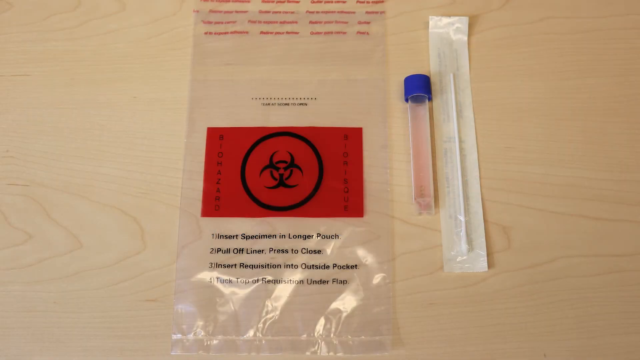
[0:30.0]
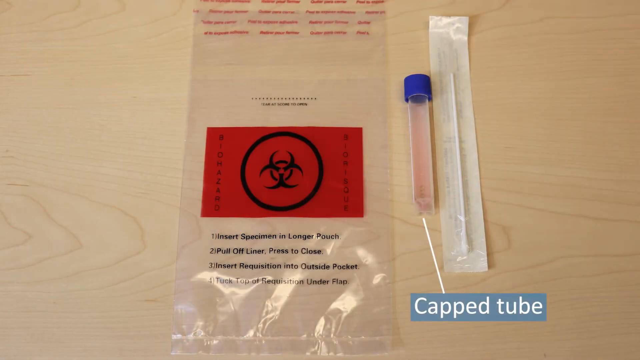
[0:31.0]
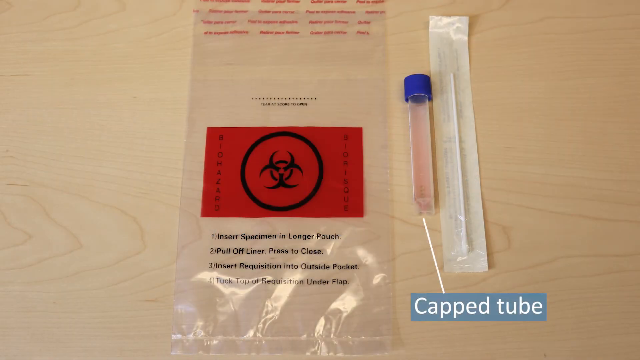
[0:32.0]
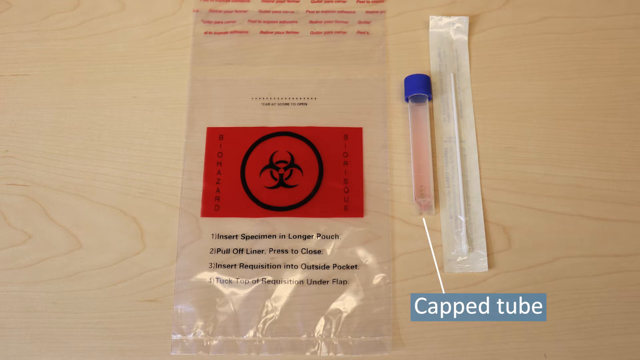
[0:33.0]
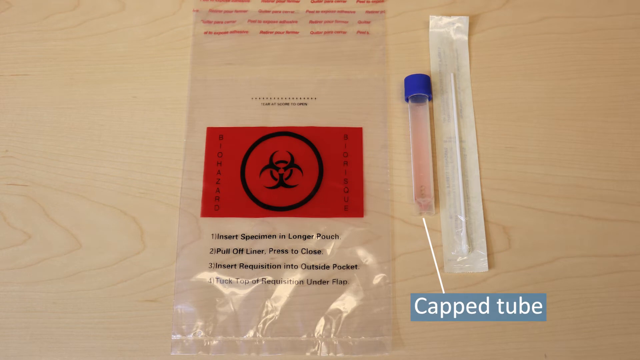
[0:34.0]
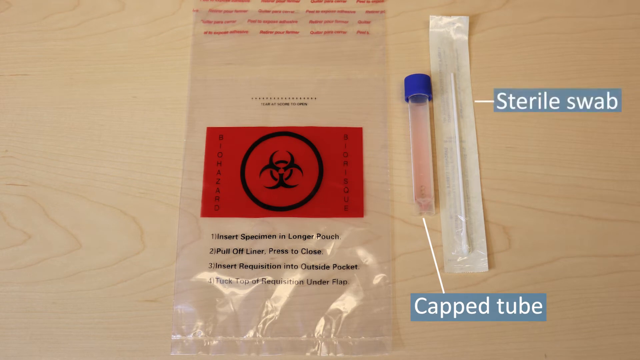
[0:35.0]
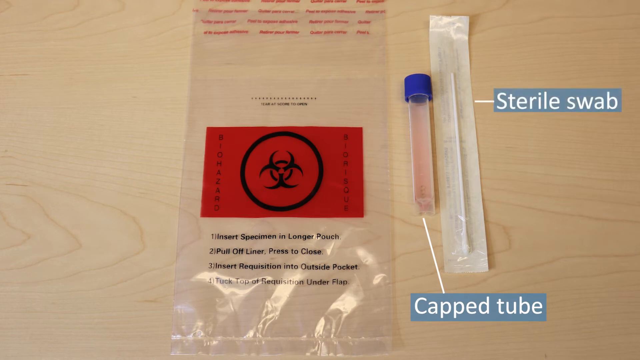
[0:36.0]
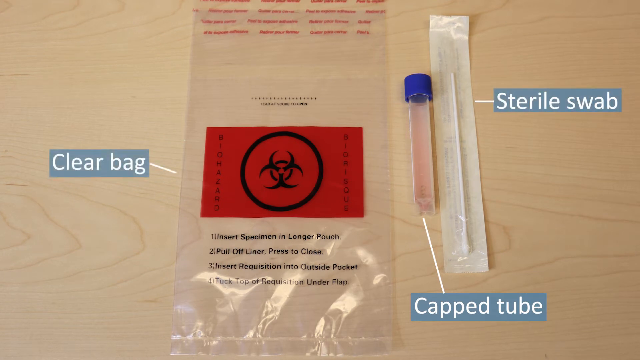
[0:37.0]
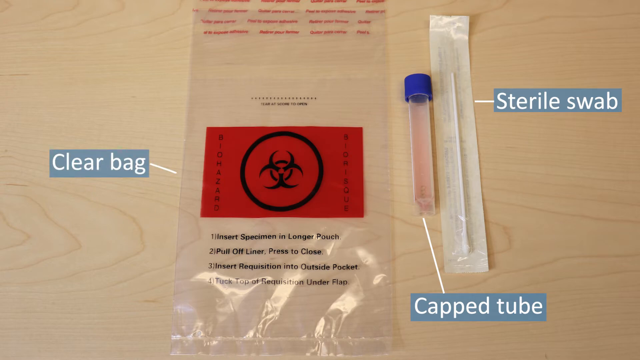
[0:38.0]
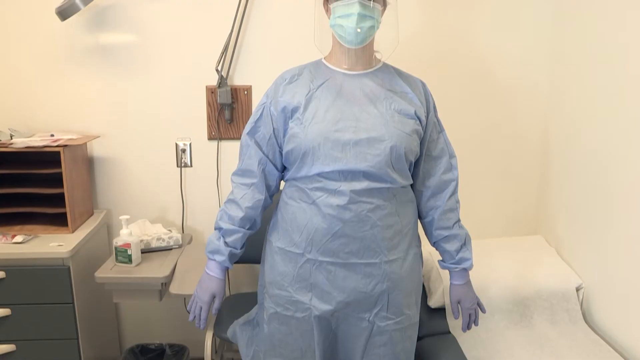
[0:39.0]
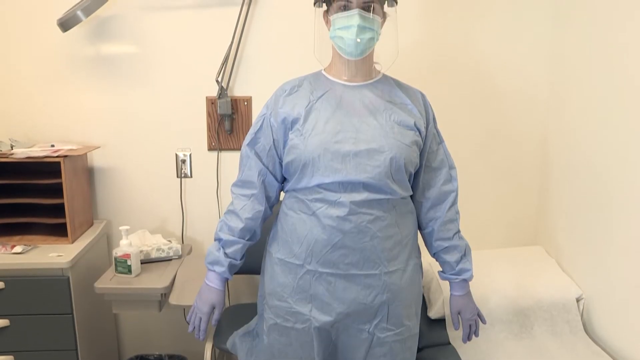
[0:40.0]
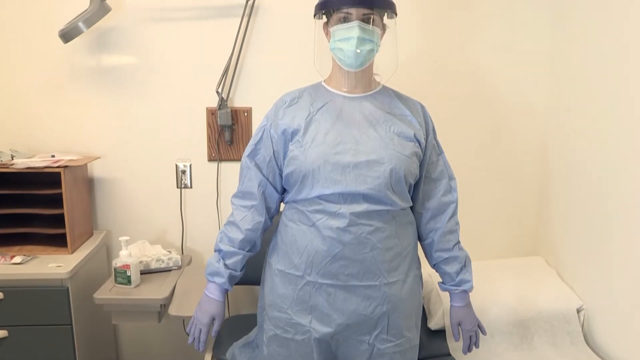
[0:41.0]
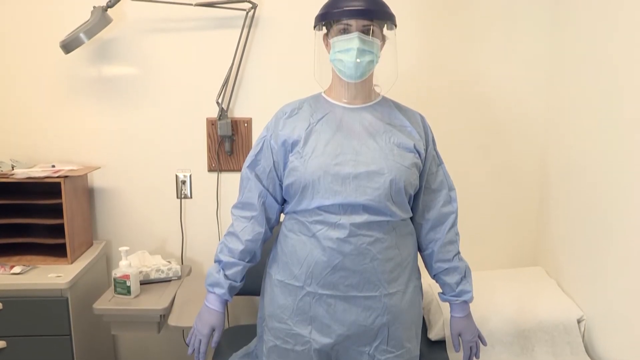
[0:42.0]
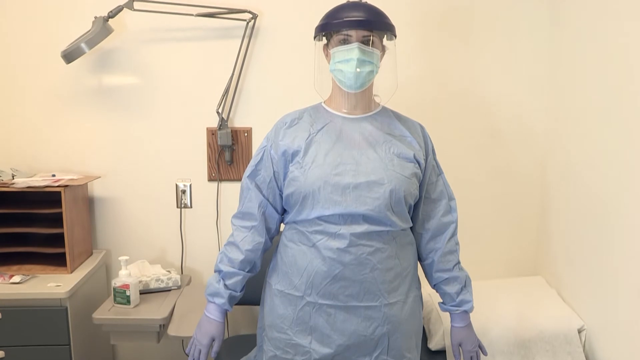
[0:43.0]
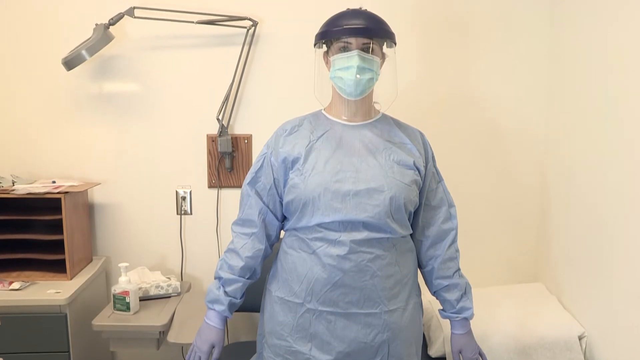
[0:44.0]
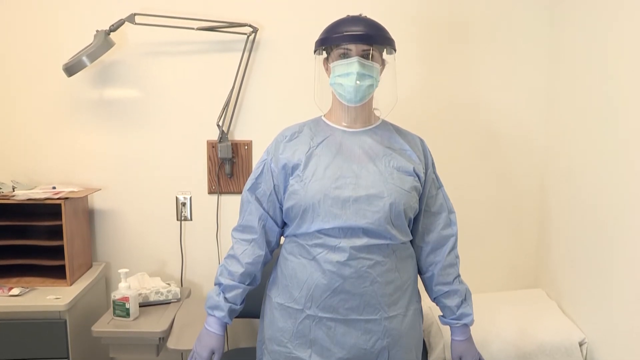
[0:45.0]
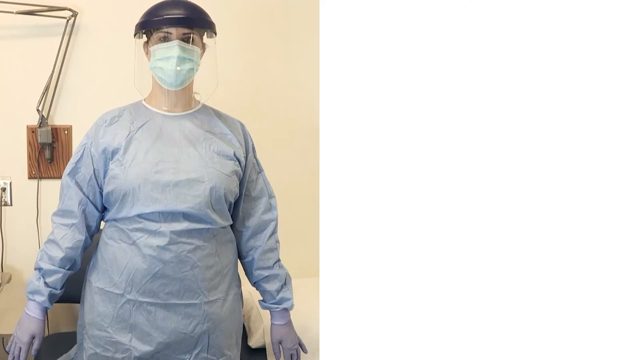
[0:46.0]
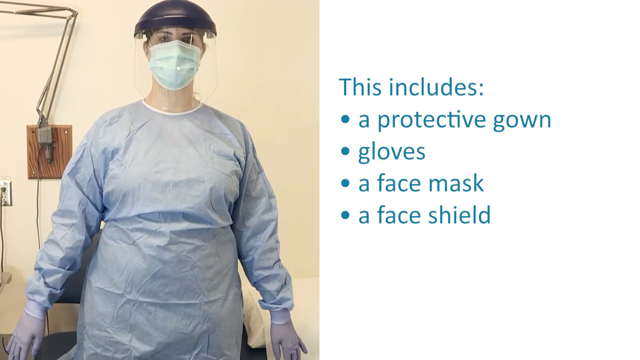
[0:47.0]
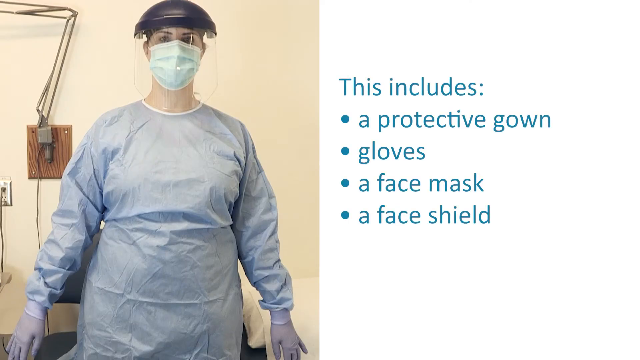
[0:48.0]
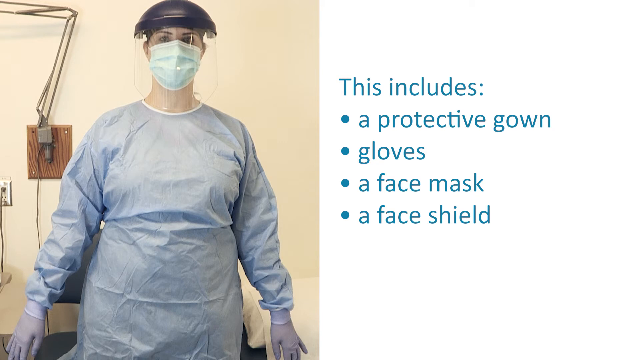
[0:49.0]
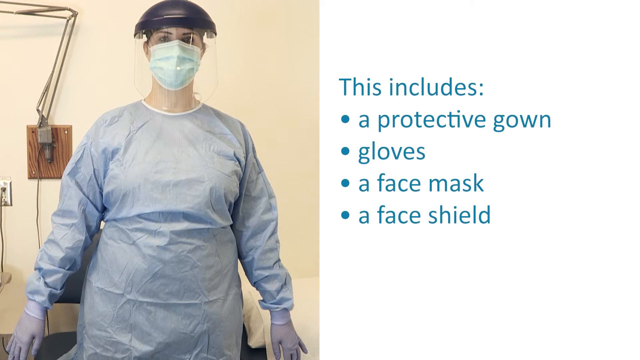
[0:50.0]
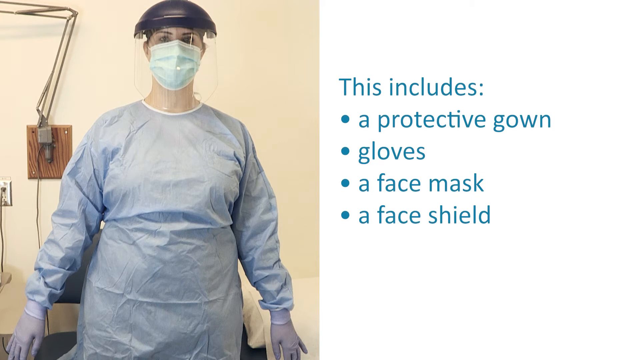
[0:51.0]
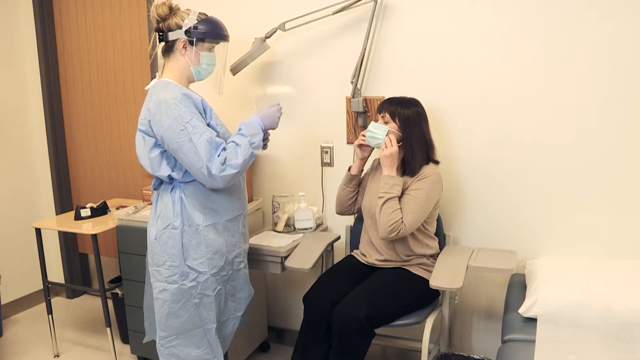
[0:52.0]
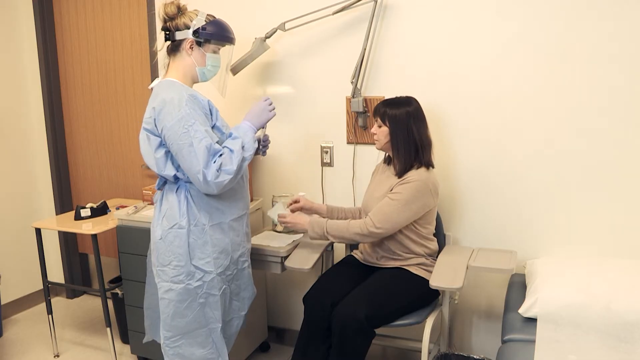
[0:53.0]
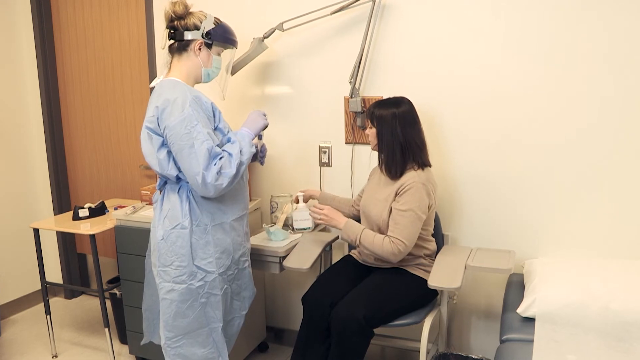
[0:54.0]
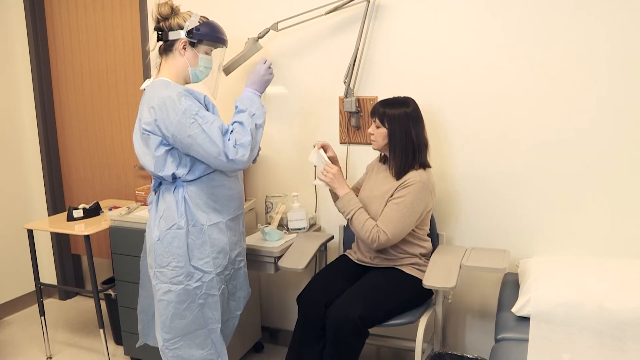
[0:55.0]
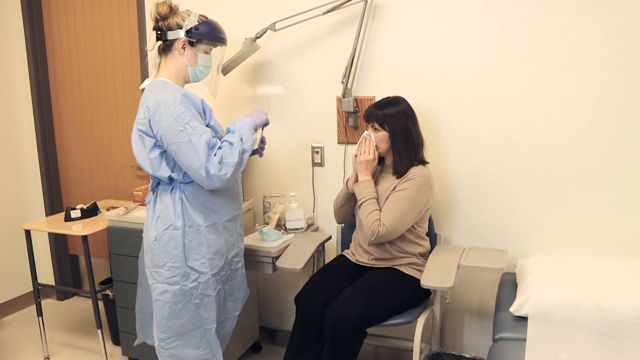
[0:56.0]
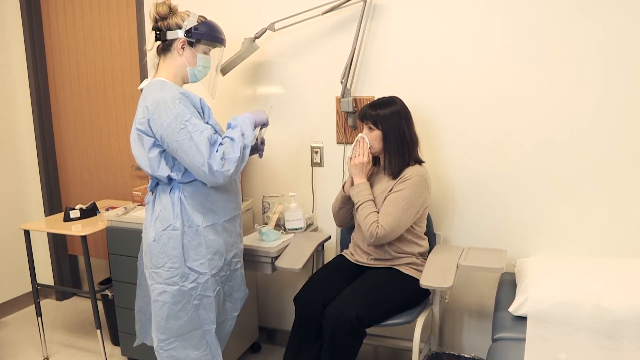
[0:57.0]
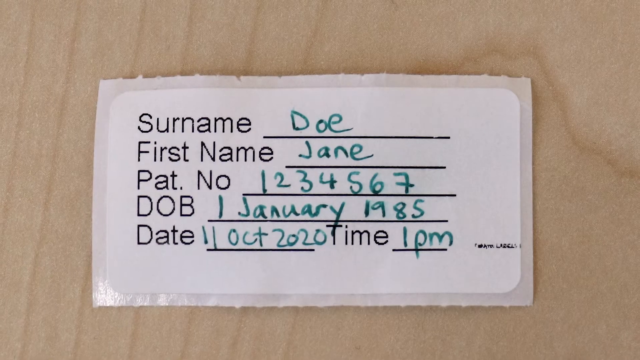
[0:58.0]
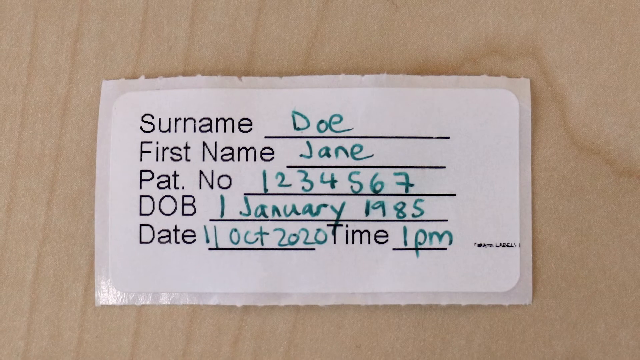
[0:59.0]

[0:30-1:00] A line points to the tube with the label "capped tube," another label next to the other item reads "sterile swab," and the words appear in a light blue rectangle with white lettering. A label for the bag reads "clear bag." The scene moves to a medical room with a little file cabinet, some type of hand sanitizer or soap on one of the little desks, and a box of tissues. Two cords come from the wall, one of them going to a lamp of the kind used in medical offices. A person wears personal protective equipment: blue gloves, a long-sleeved blue top, medical pants, a blue mask, and a face shield. The person is shown standing there with the lamp in the background. Then the picture of the person is on the left, and on the right is a white screen with blue letters reading "this includes" followed by four bullet points listing "a protective gown, gloves, a face mask, and a face shield." In the next scene, a woman sits in a medical chair of the kind used for drawing blood. She wears a long-sleeved tan shirt and black pants, and her hair is dark brown. The woman in PPE stands in front of her with the tube in her hand. To the side are a little table with a tape dispenser and a small file cabinet, and in the background is a brown door with a black border. The seated woman blows her nose. Next, a label for the test tube is shown: surname "Doe," first name "Jane," "Pat. number" "1234567," DOB "1 January, 1985," date "11 October, 2020," and time "1 p.m."